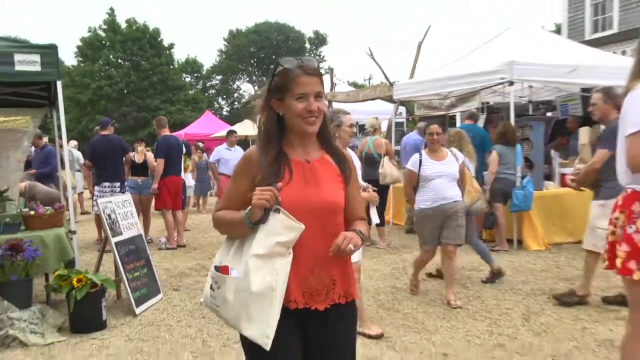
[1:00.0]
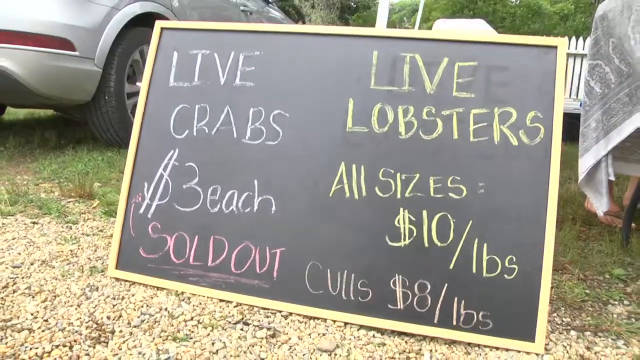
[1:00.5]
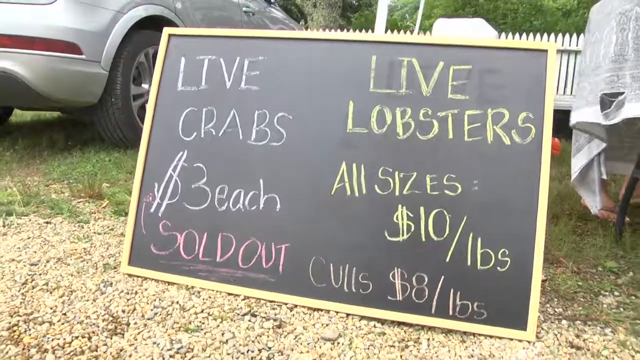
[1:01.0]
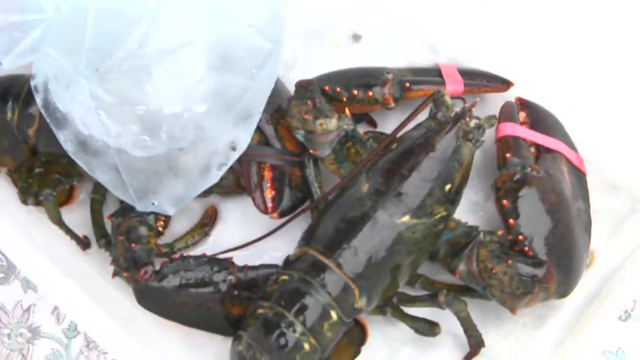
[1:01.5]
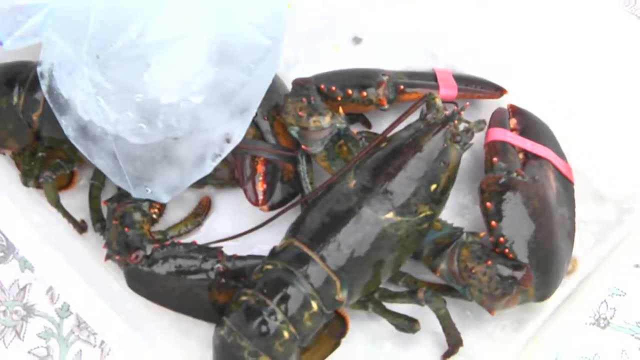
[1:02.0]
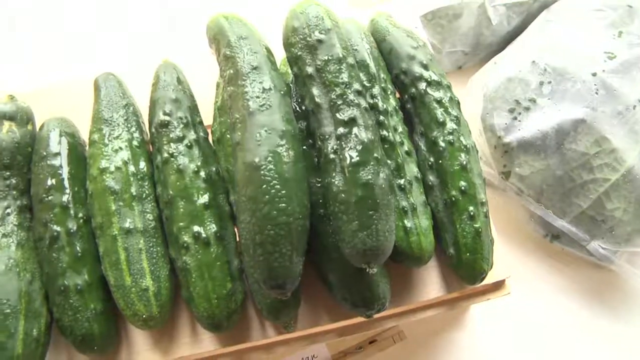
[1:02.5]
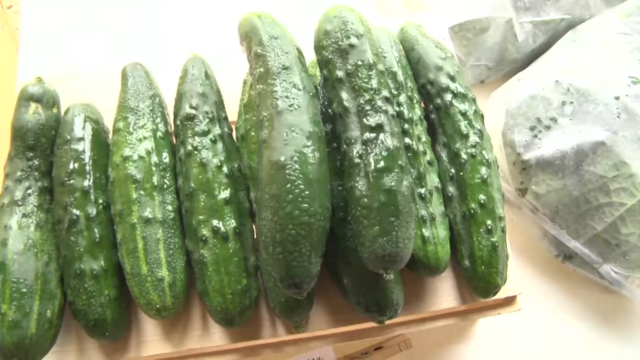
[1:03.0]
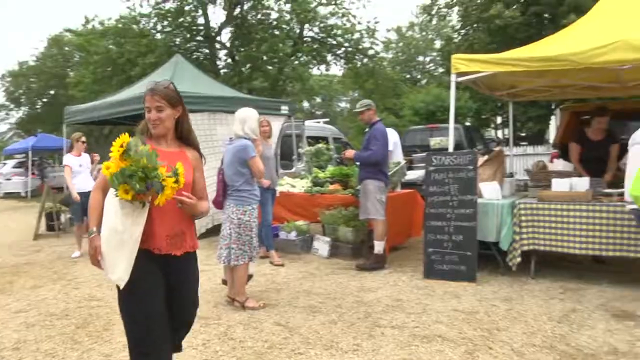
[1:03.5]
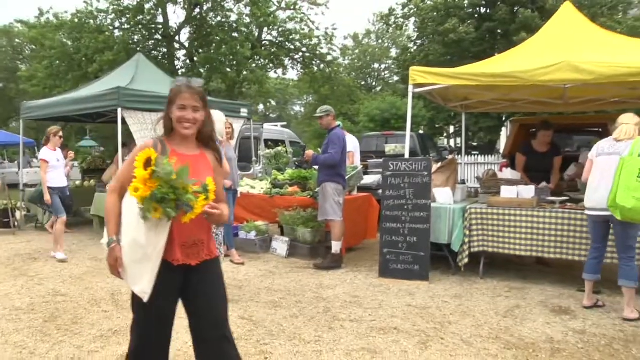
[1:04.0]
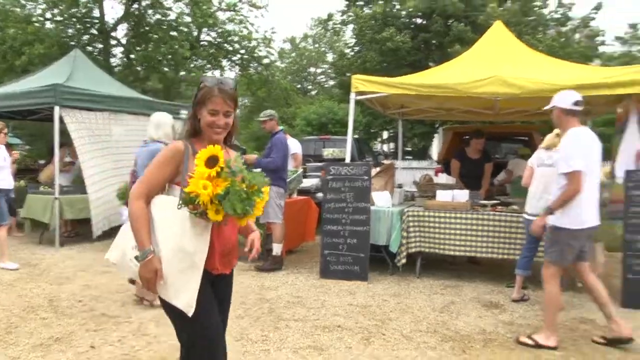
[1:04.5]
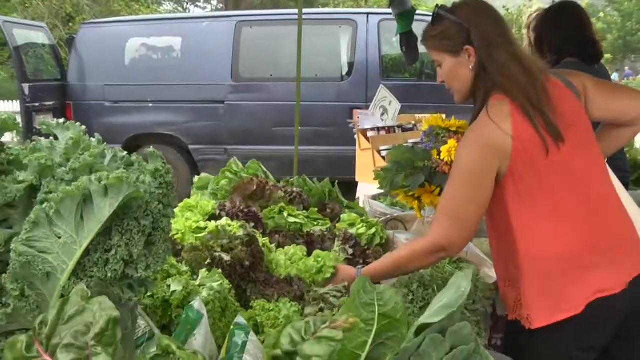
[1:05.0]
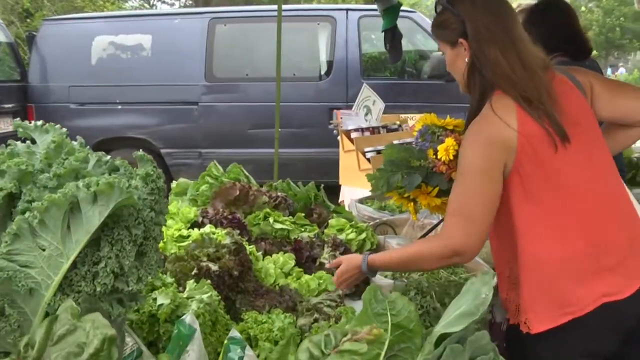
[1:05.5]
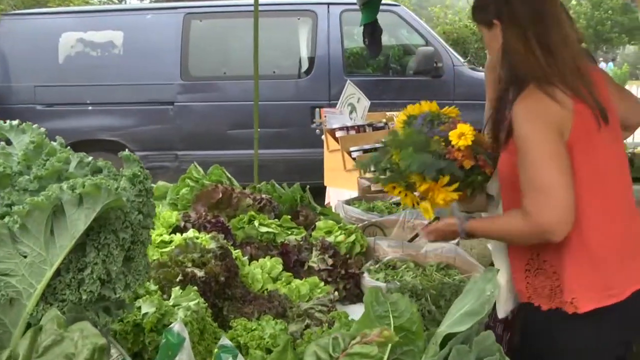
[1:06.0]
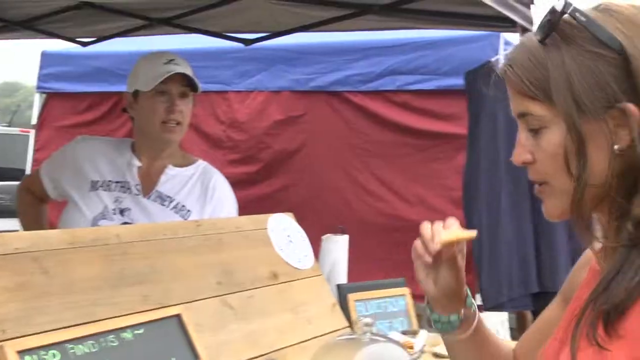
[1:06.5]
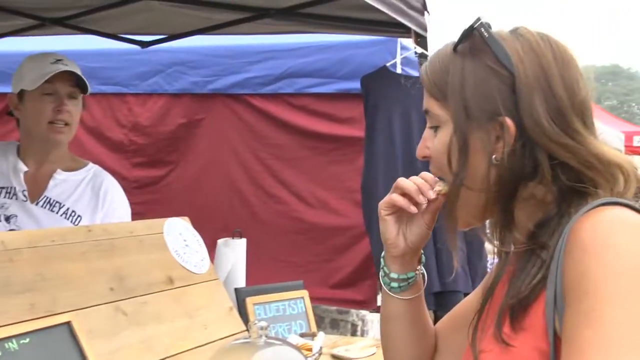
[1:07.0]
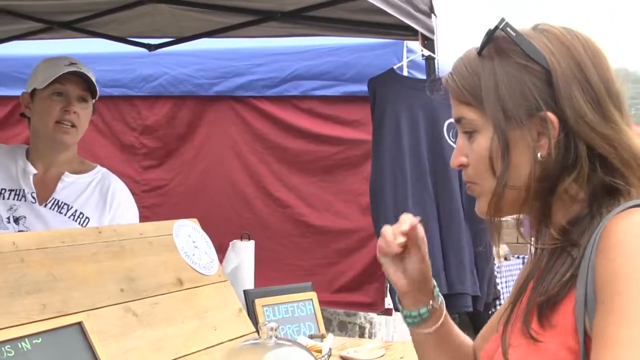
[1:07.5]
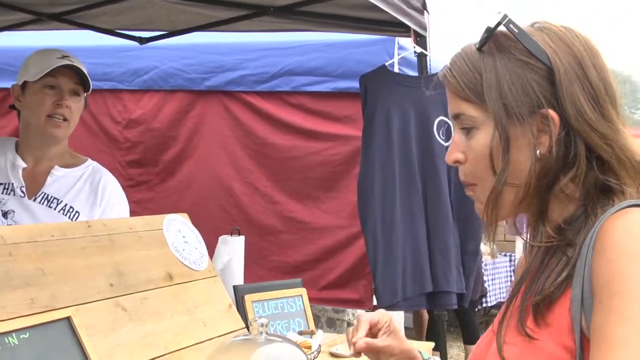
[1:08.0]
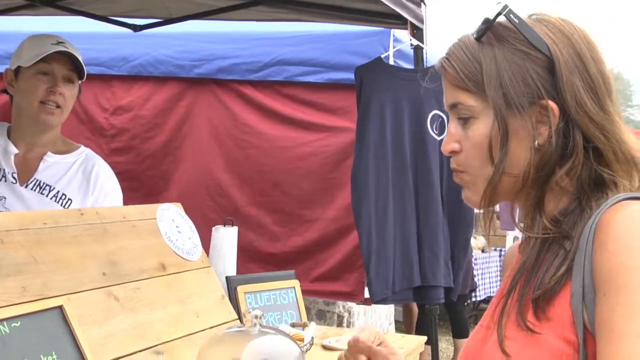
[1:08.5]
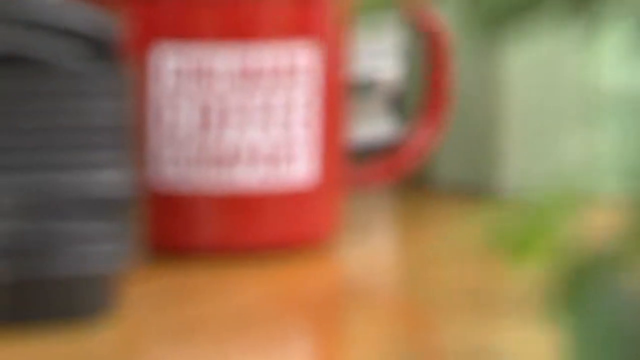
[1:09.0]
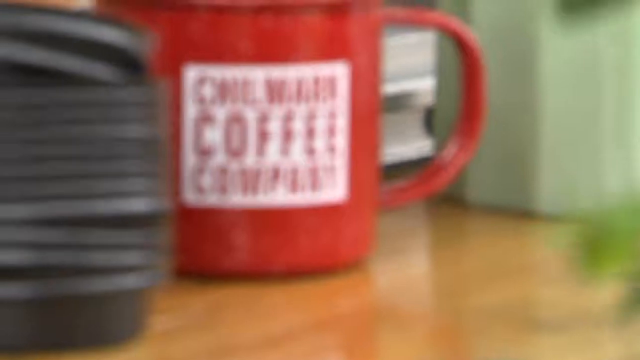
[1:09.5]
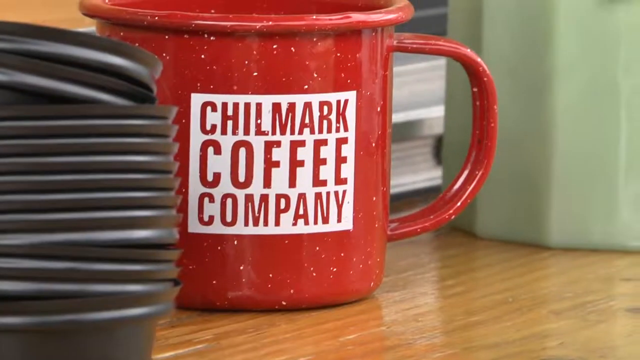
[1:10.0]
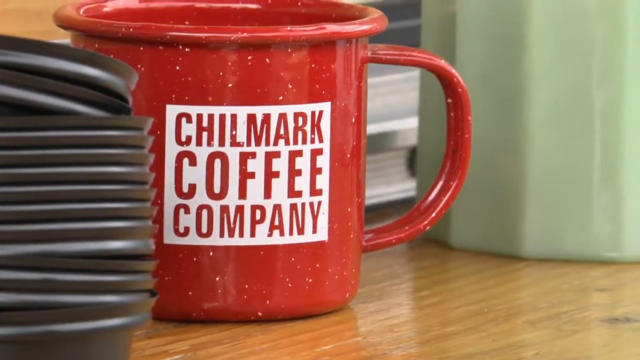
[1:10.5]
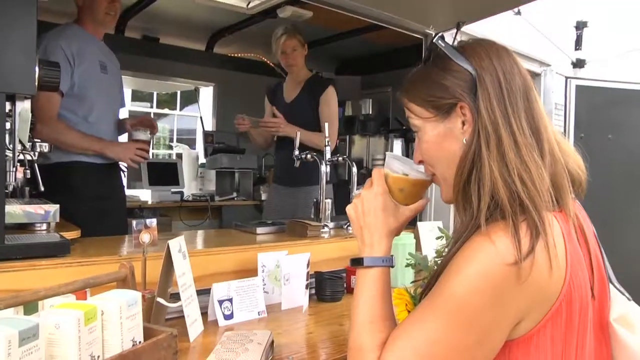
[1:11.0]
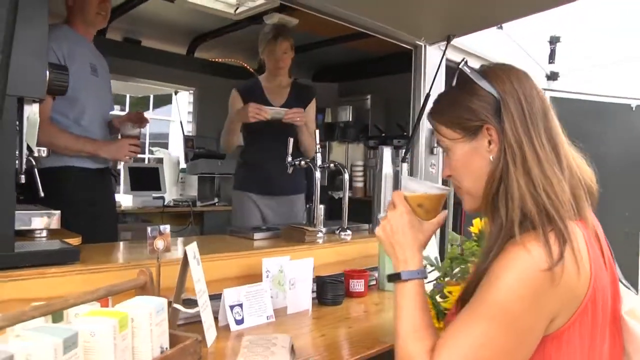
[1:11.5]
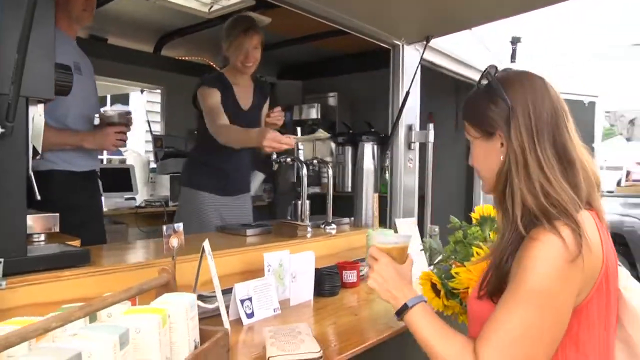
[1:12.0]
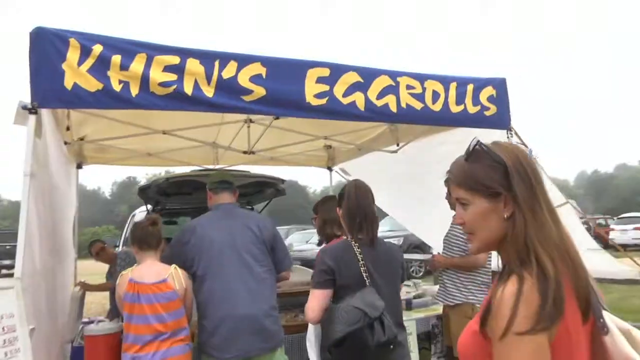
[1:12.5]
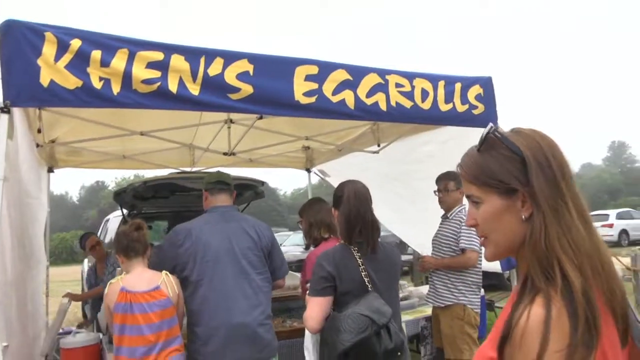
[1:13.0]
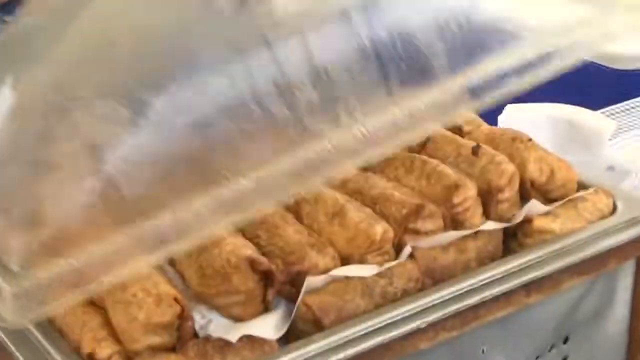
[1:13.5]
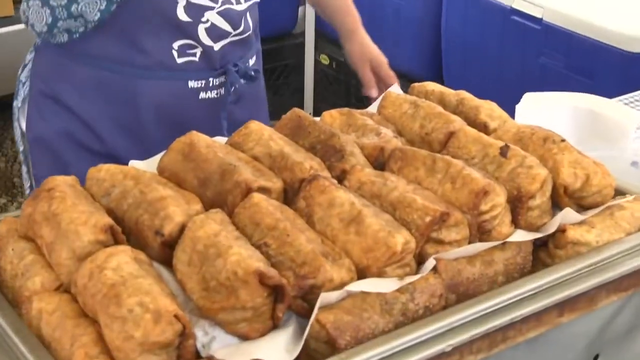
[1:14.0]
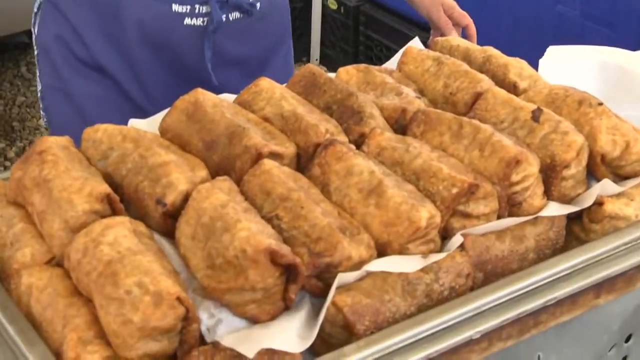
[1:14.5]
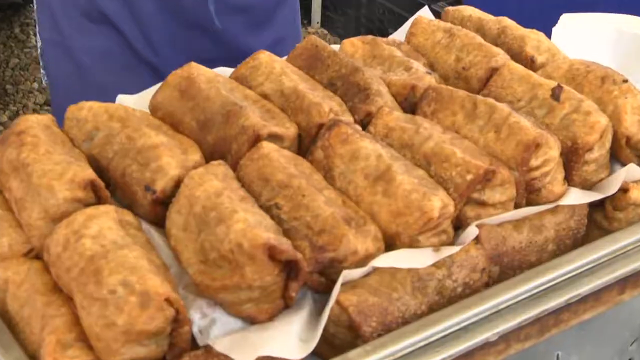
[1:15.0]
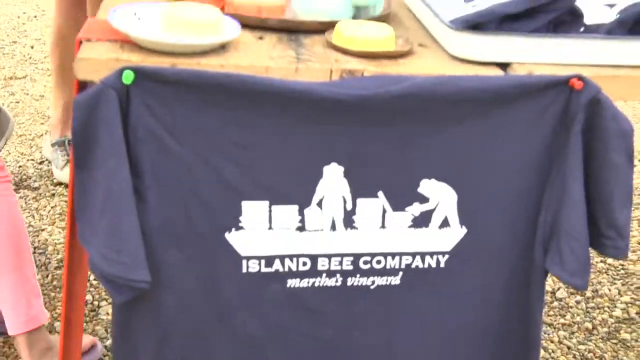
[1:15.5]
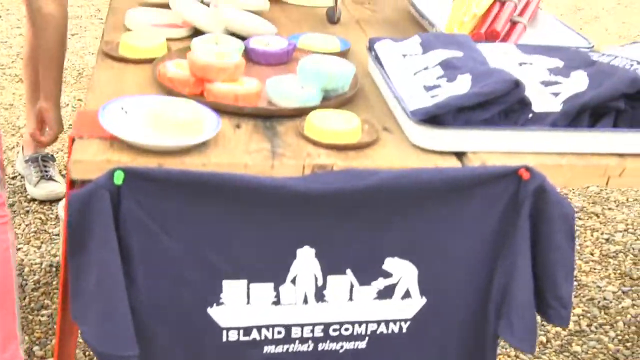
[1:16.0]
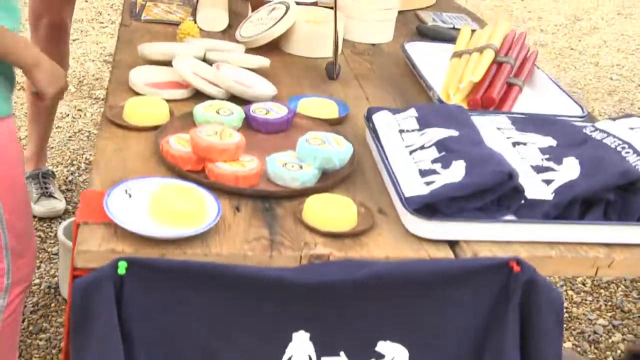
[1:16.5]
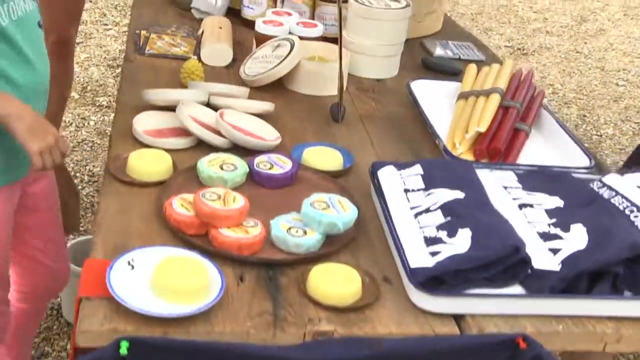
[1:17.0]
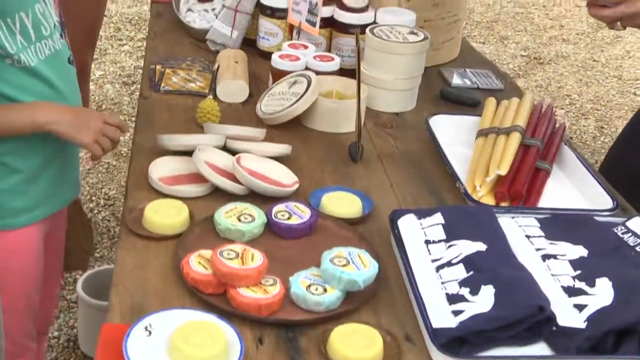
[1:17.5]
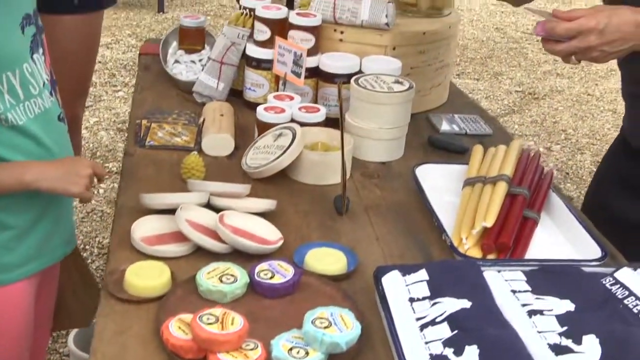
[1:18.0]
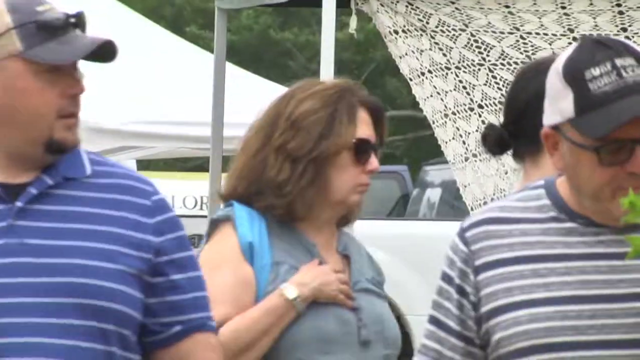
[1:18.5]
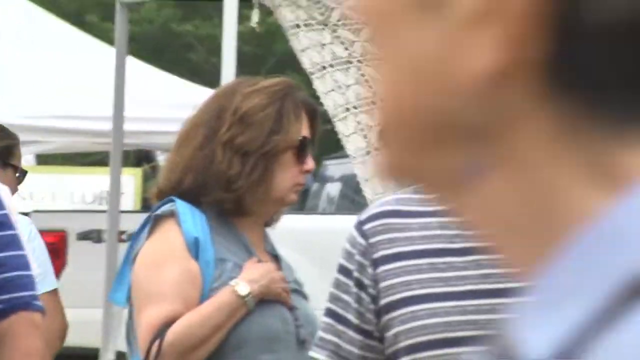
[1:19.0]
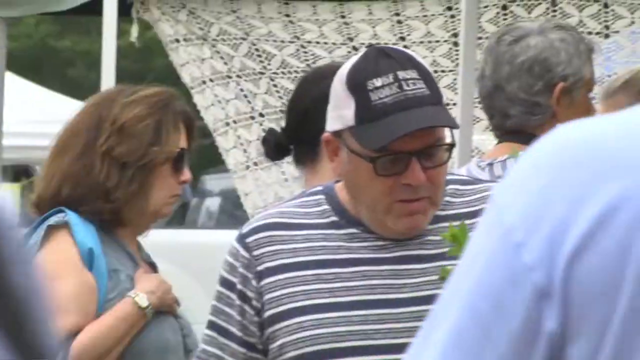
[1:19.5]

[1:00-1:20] A stall has fresh crabs for sale, with a blackboard that says "live crabs $3 each sold out all sizes $10 / 11lbs." The lady in red buys a bunch of flowers that includes yellow sunflowers. She is then seen trying some food at the tuna spread stall. A red cup shows the writing "Chilmark Coffee Company." She is at a bar trying a yellow drink. The video cuts to fresh produce and sausage rolls, and then to a store with various produce for sale. A blue t-shirt with the writing "Island Bee Company, Martha's Vineyard" is for sale; the table holds various items, including the t-shirt and different cheeses, and there are also yellow and red candles for sale. Various people look at the store.